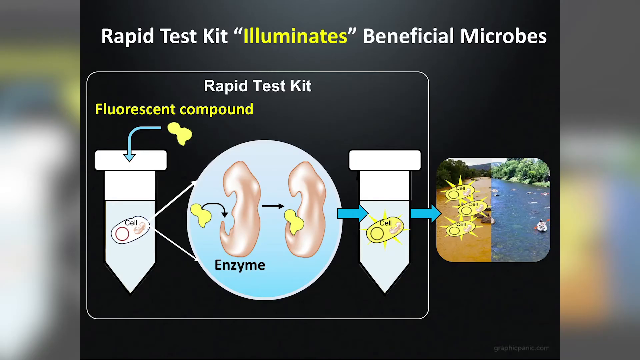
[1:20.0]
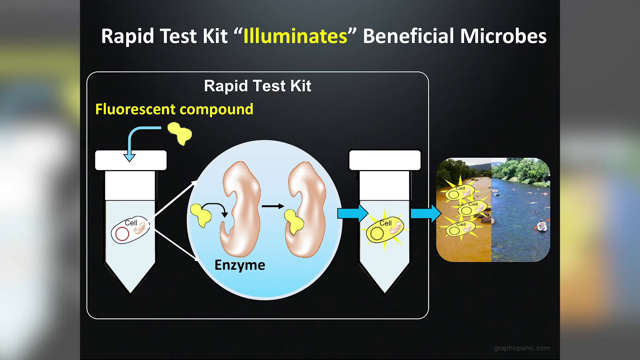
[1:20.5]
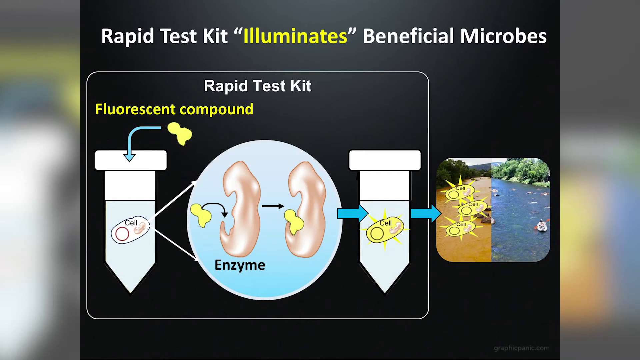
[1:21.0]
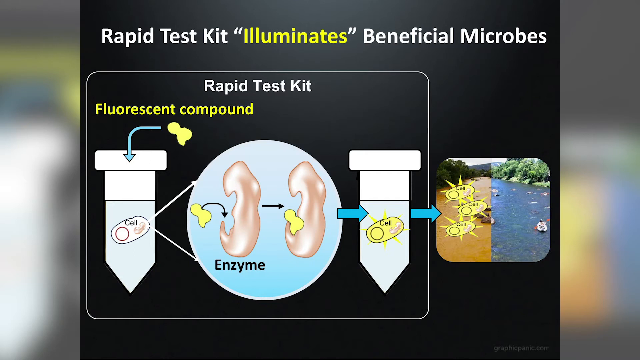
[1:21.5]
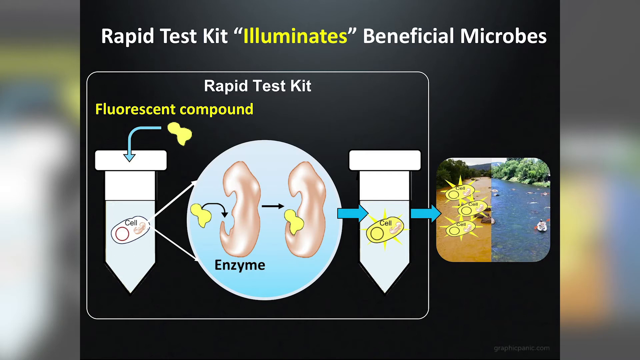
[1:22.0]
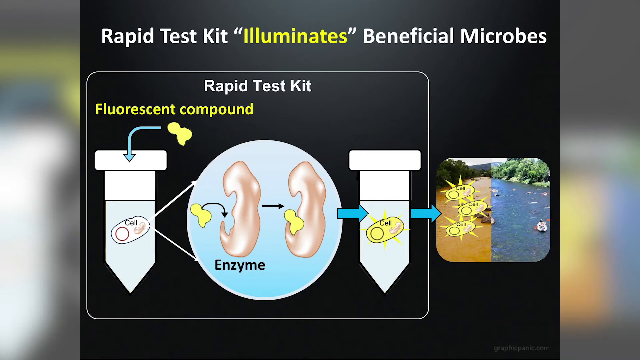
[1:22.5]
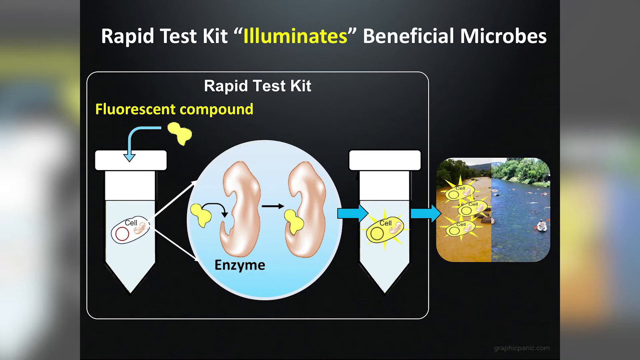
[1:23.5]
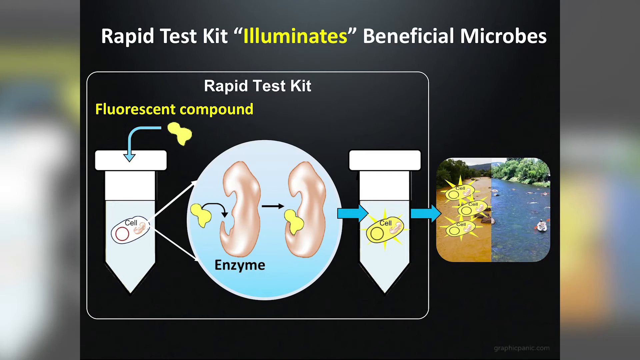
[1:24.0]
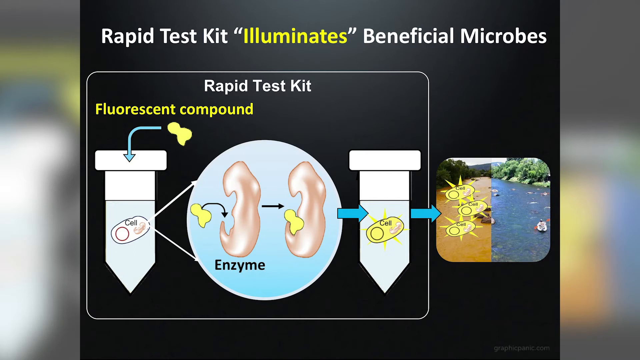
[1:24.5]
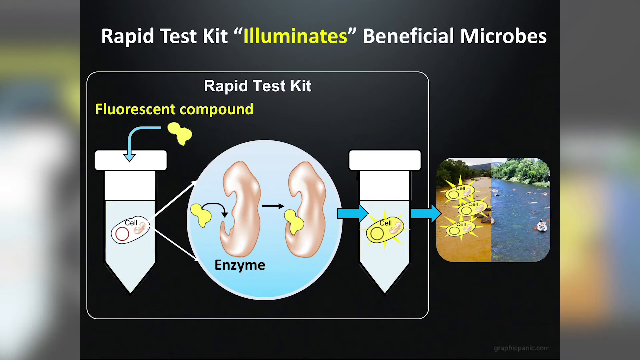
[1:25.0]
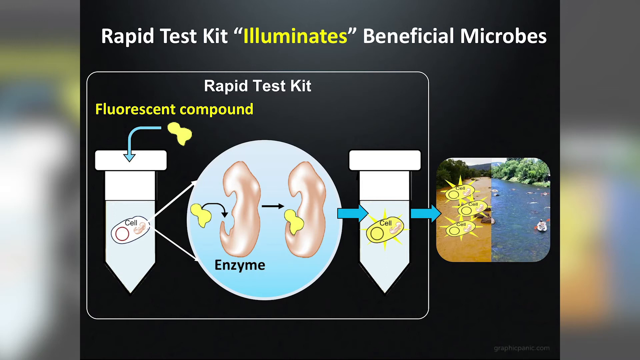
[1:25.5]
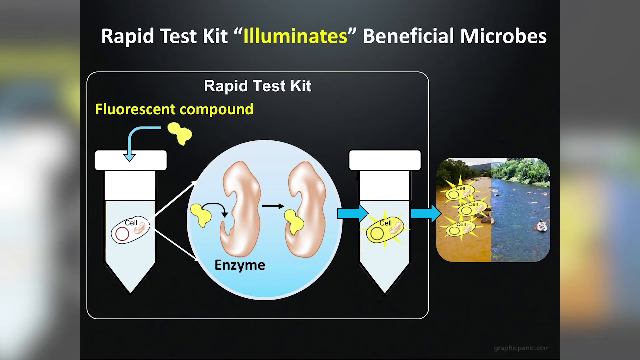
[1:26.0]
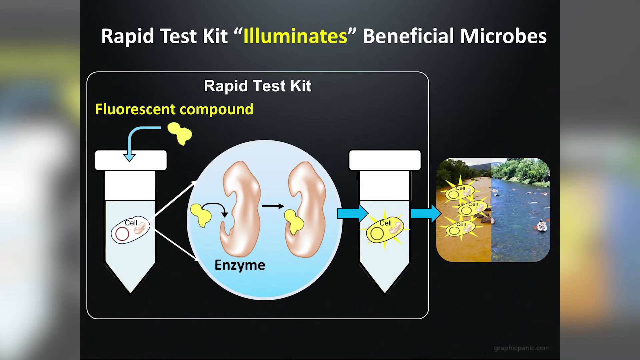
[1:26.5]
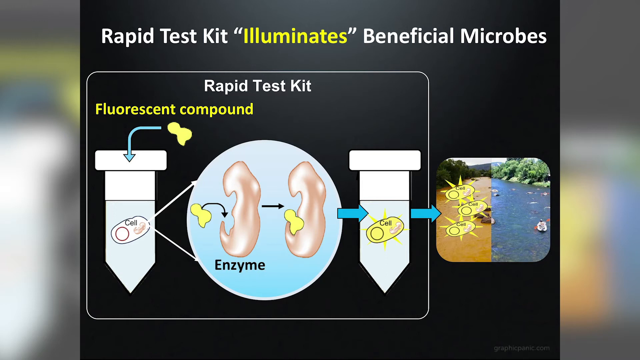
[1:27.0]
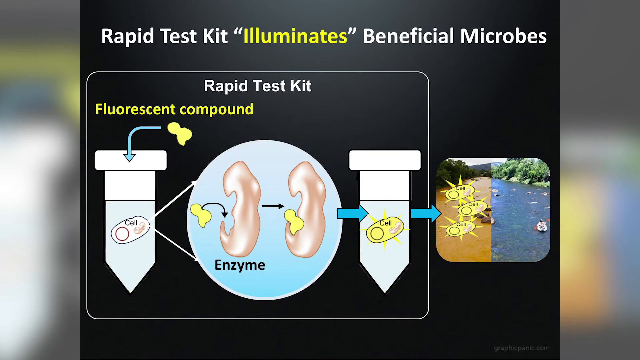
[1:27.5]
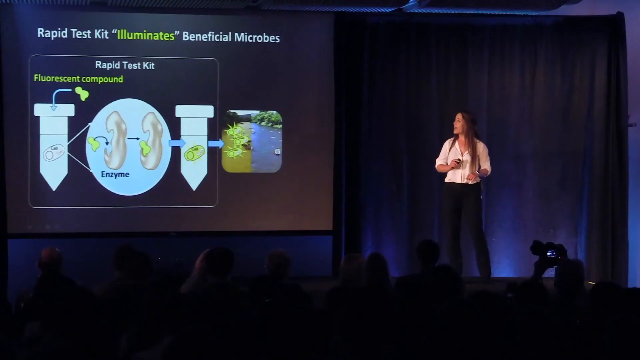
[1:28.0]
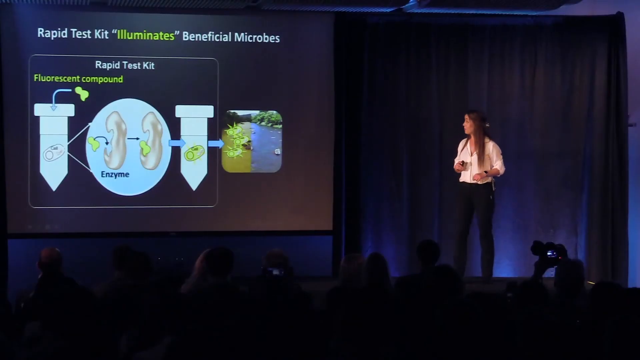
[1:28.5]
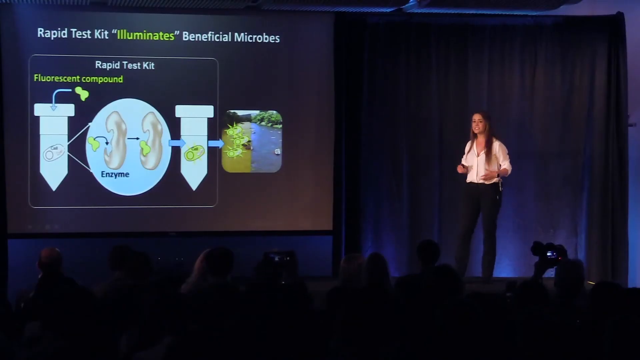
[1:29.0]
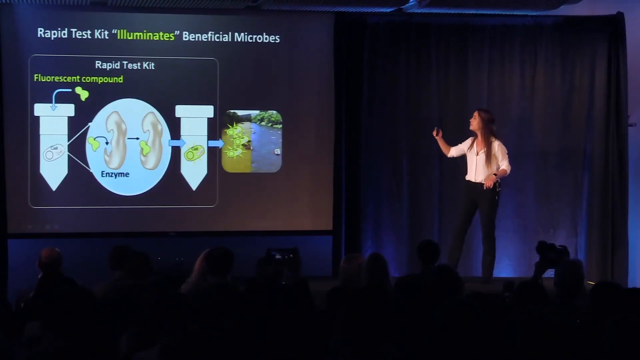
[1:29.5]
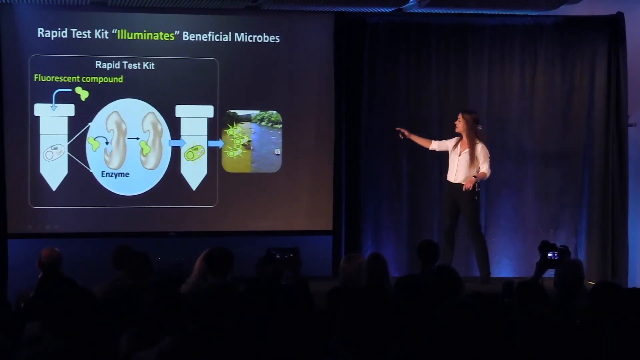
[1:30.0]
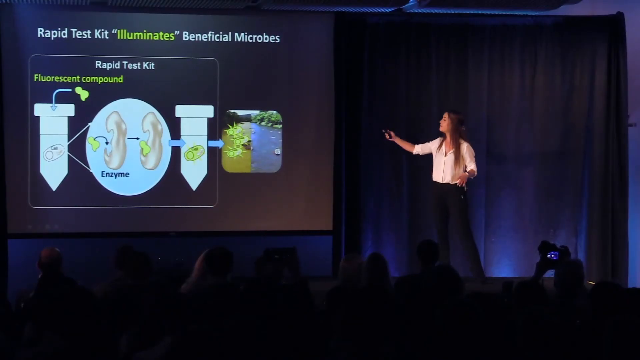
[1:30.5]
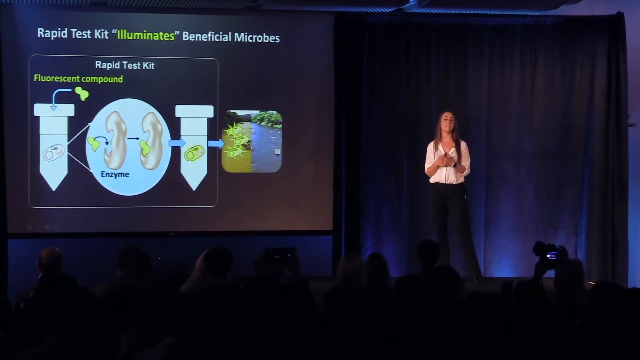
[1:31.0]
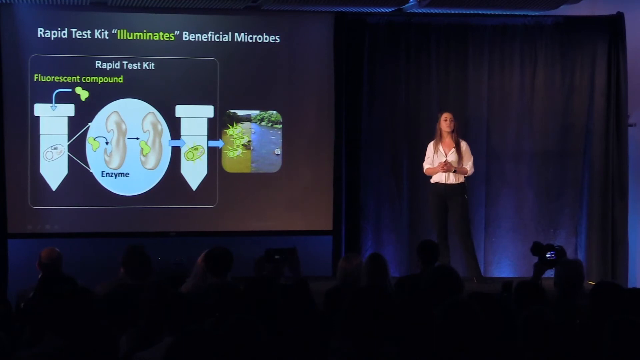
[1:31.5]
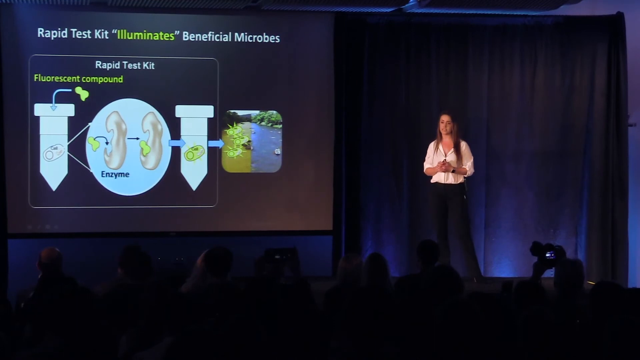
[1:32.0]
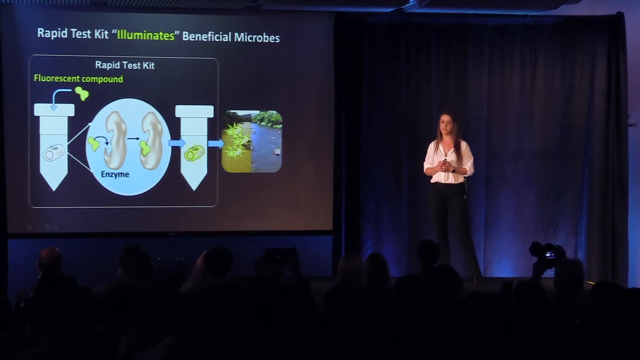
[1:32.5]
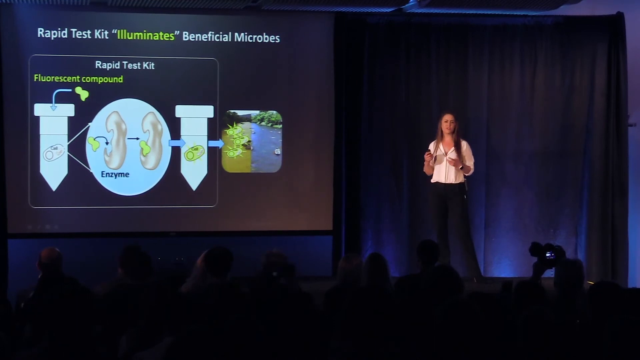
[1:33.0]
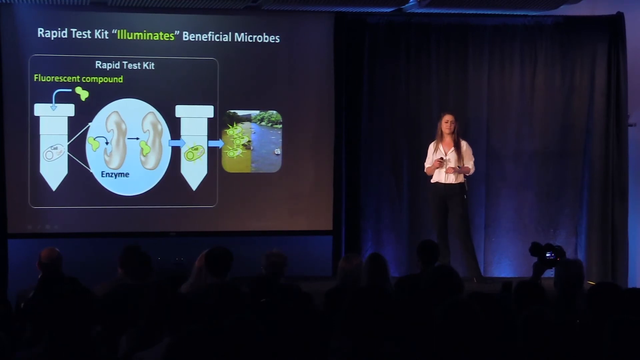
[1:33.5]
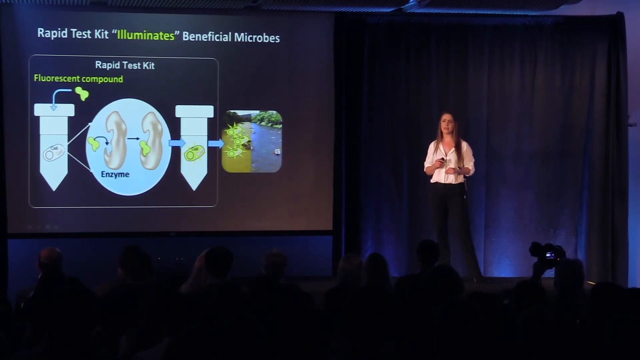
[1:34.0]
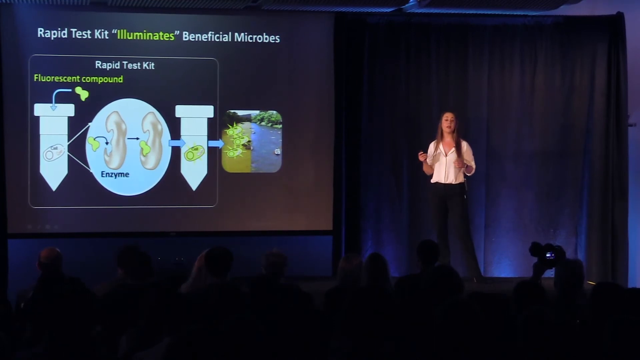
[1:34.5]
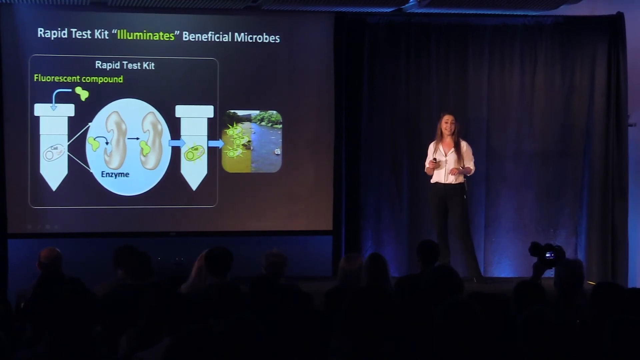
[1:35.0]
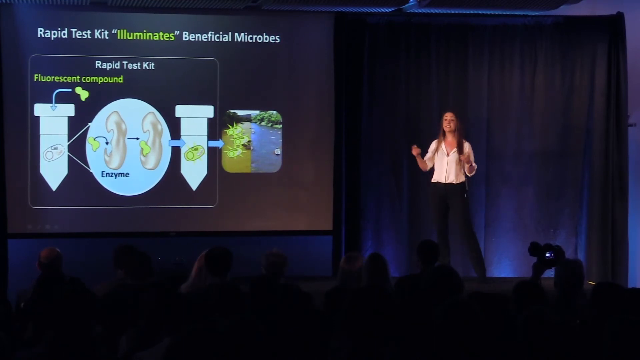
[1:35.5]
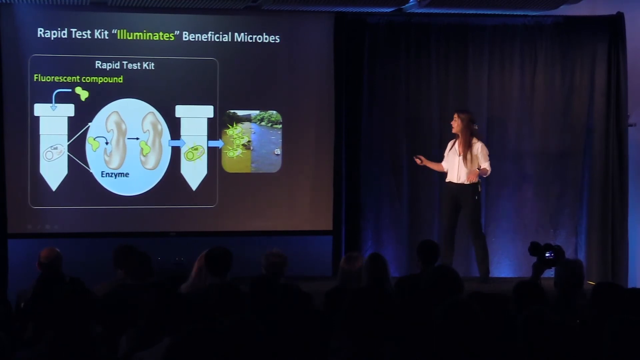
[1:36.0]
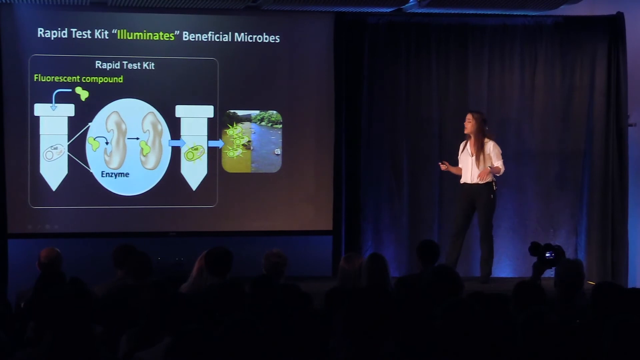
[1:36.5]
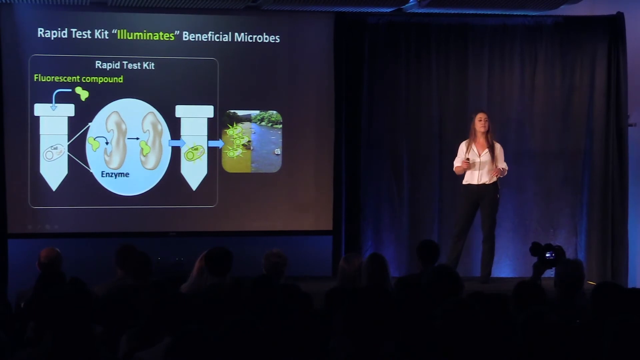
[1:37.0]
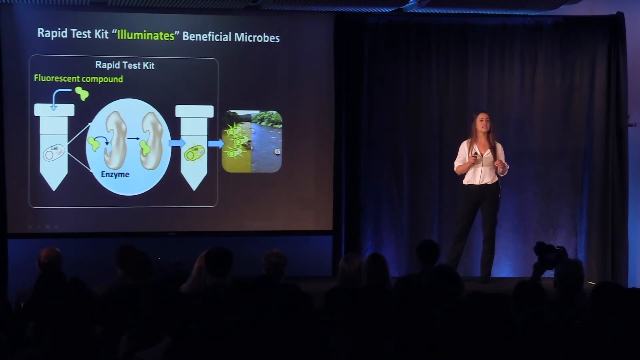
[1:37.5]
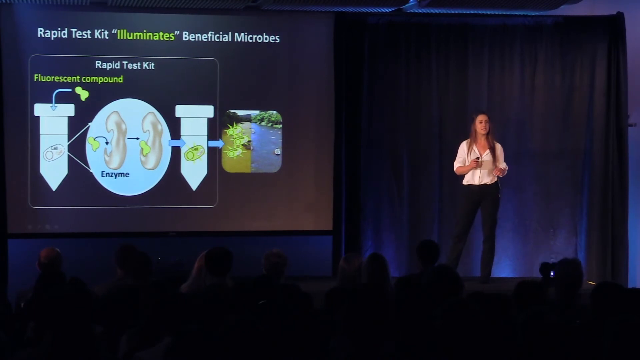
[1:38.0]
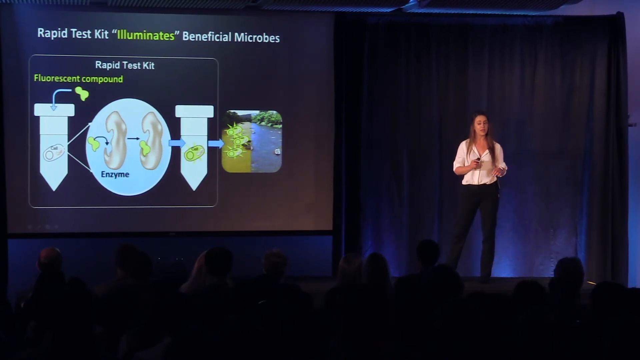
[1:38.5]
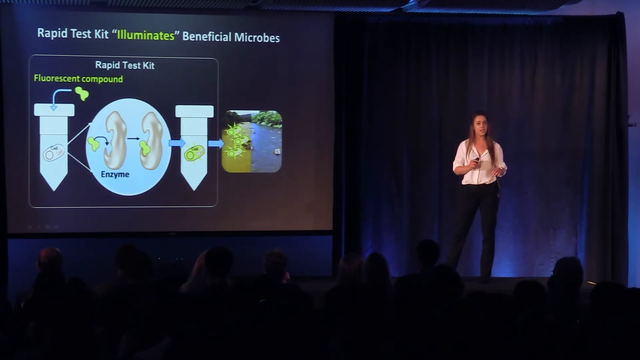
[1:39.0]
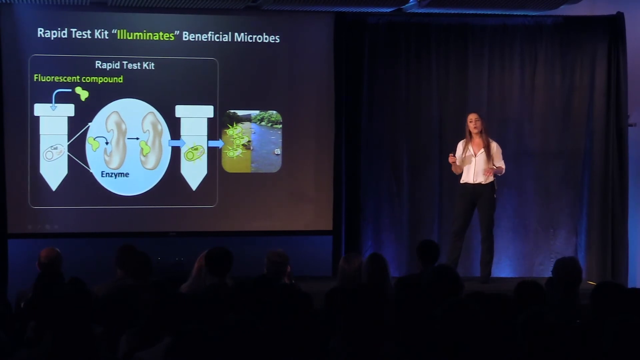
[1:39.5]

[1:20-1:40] A TED Talk-style video opens on a black-background slide with graphics and a mix of white and yellow text reading "rapid test kit illuminates beneficial microbes." Graphics in a square box carry the words "rapid test kit, fluorescent compounds," flanked by white graphics that look almost like test tubes with gold cells in them, along with blue and white arrows. Between the two test tube-like shapes is a circle containing cartoon-looking enzymes, gold and tan blobby shapes. Blue arrows point toward a picture of dirty, murky brown water with some rocks visible and cartoon gold cells over it; on the other side is a picture of calm, serene water that looks clean, blue and very natural, apparently a theoretical before-and-after picture. The view holds on this, then cuts back to the woman on stage, visible toward the right with the projector on the left. She wears a white shirt and black slacks, has long brown hair and a smartwatch, and holds a black clicker that controls the projector in one hand. From this angle she appears to have a white clip in the back of her hair. A few audience members appear to be using various devices to record her as she speaks. She gestures toward the projector, keeps alternating her gaze between the projector and the audience, and moves her hands animatedly, bringing them toward herself and back out.